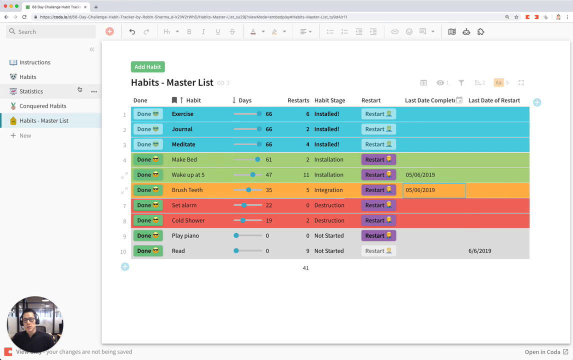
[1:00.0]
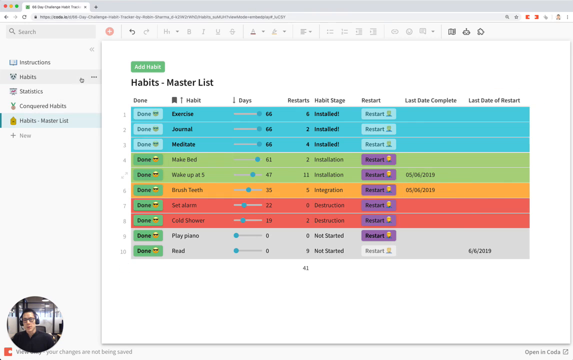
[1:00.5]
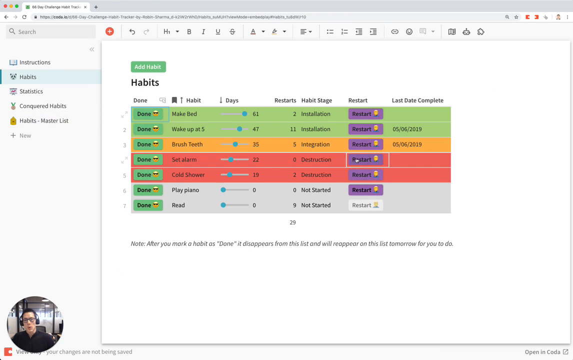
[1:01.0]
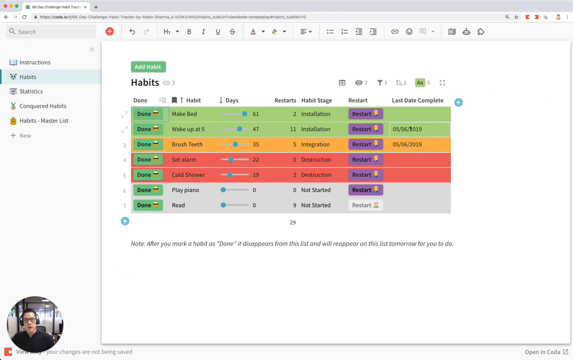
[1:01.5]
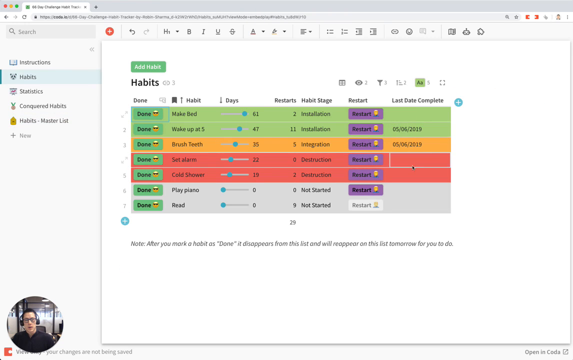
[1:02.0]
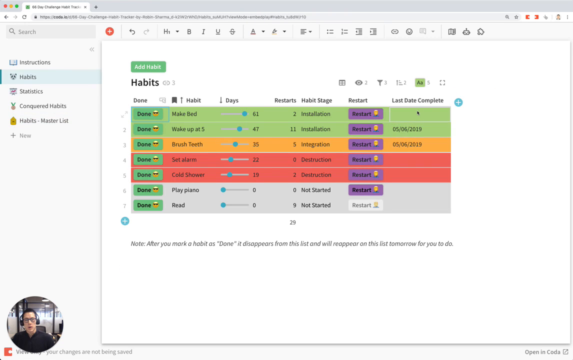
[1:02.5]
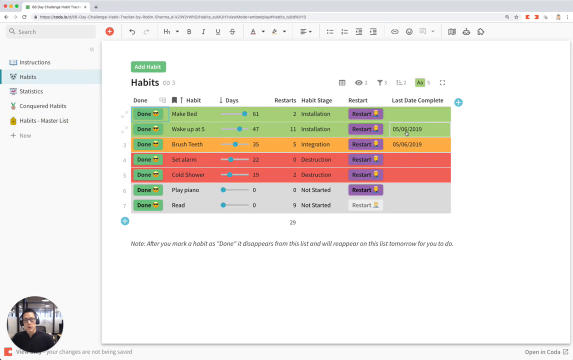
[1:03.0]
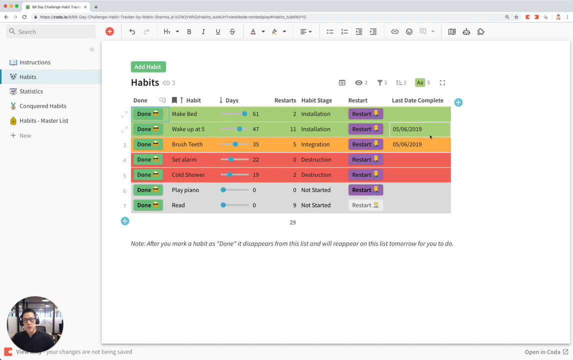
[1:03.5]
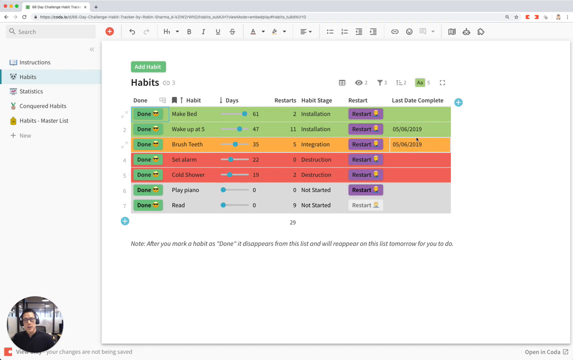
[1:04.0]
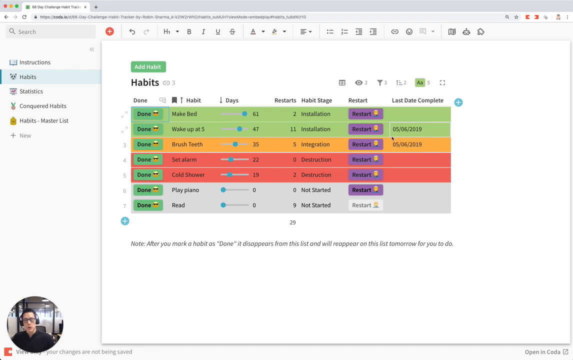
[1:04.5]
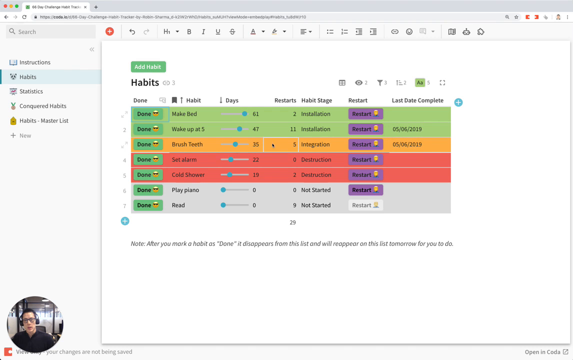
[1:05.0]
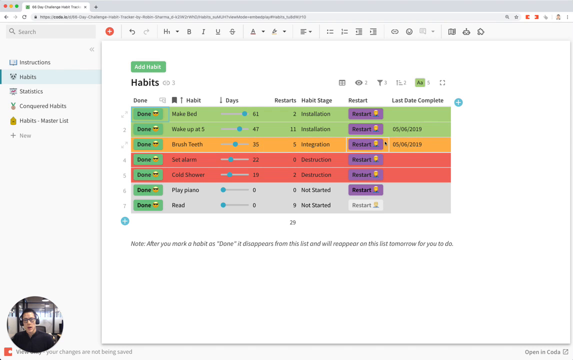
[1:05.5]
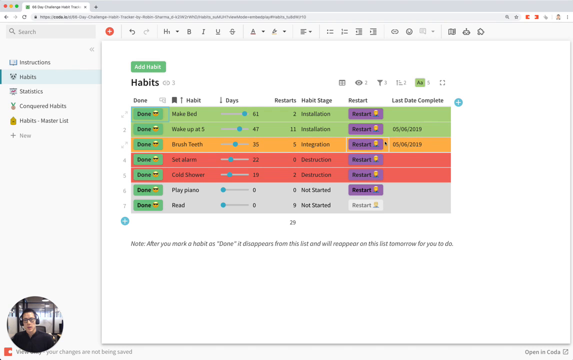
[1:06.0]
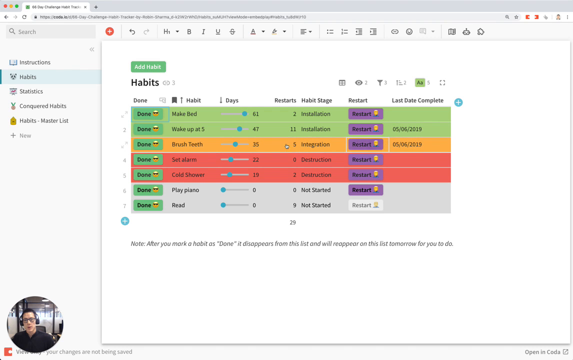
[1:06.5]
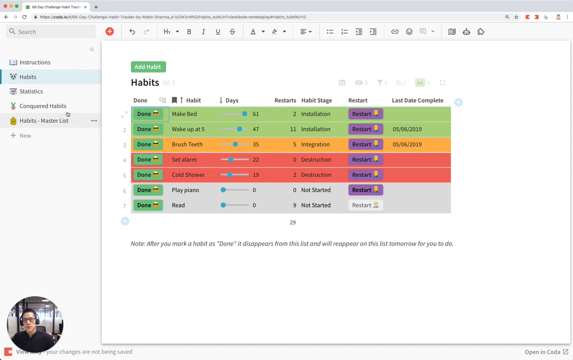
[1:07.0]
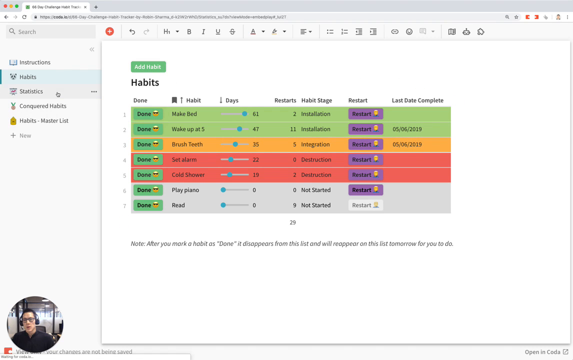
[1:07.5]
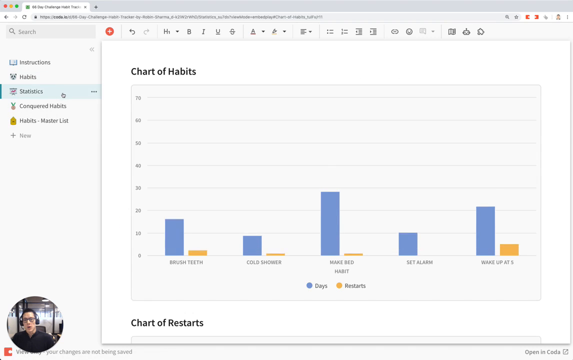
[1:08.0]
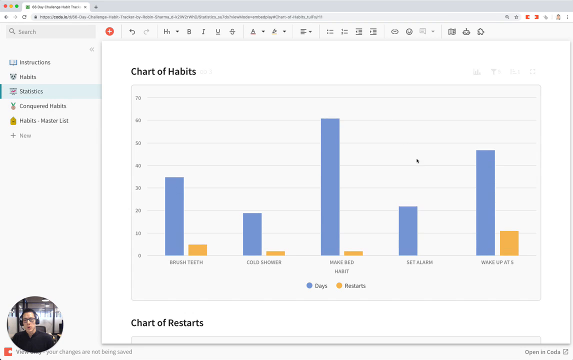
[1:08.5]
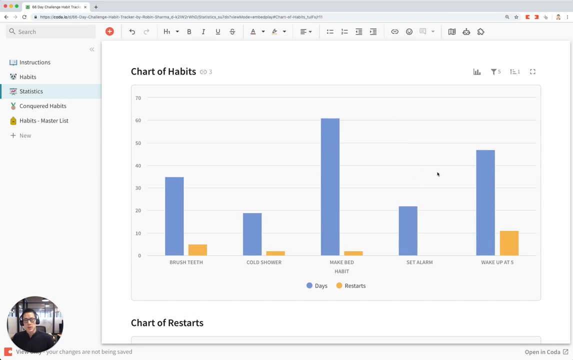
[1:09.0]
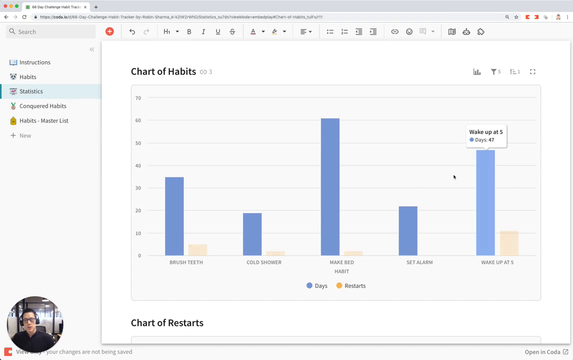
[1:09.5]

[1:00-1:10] He goes to the orange line reading "05/06/2029", on an orange page for its habits, and highlights it. He goes back and forth between two habits on the numbered list, which currently has seven items on the habits page, moving between three and two, which have last date complete calendar settings. He then goes to the statistics tab and highlights a statistic: there are five bar graphs with comparisons, a blue color labeled "days" in black text indicating number of days and an orange color labeled "restarts" in black text indicating the number of restarts, placed side by side. He goes through and highlights the bar graphs on the right-hand side.